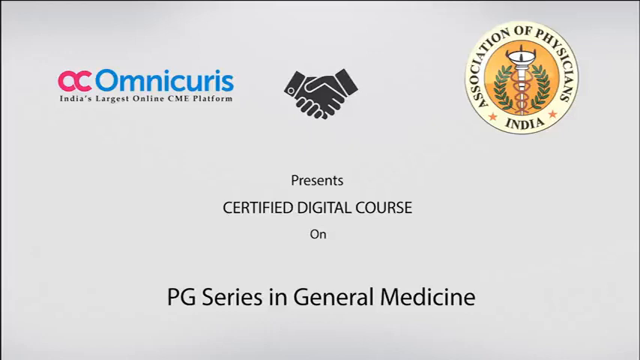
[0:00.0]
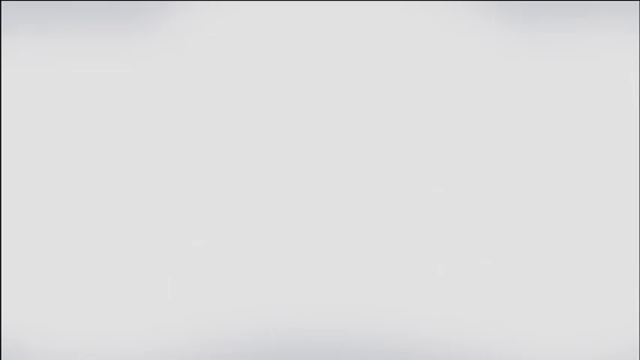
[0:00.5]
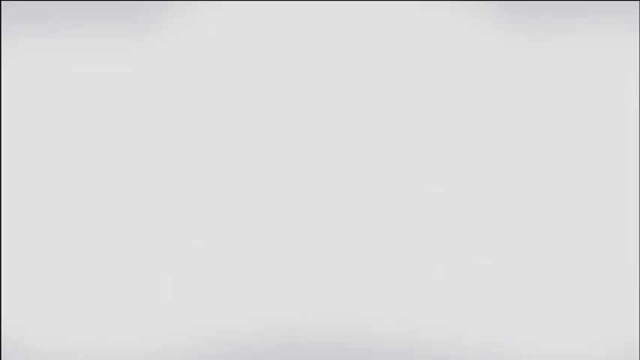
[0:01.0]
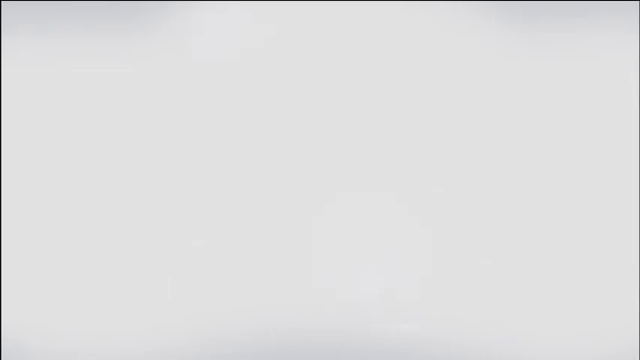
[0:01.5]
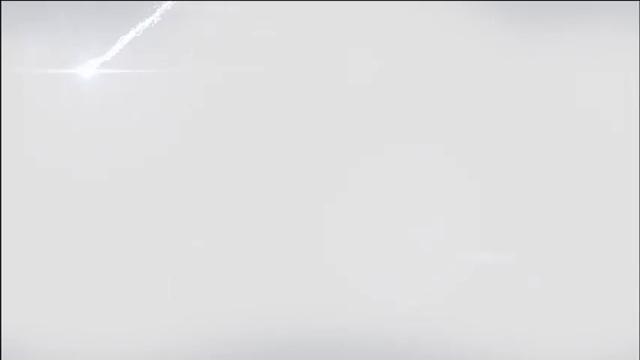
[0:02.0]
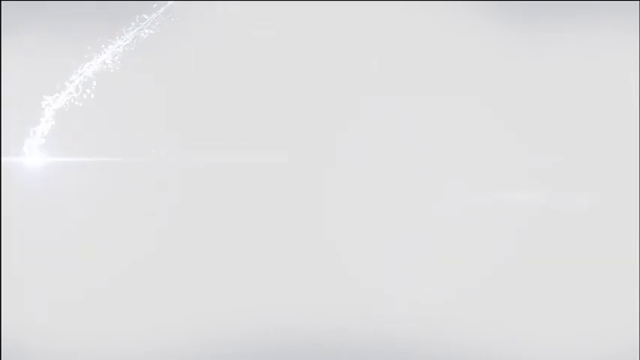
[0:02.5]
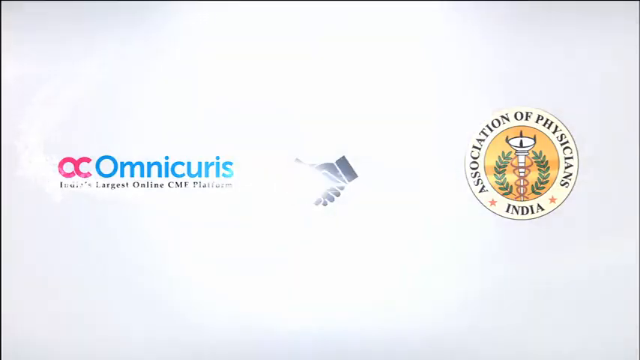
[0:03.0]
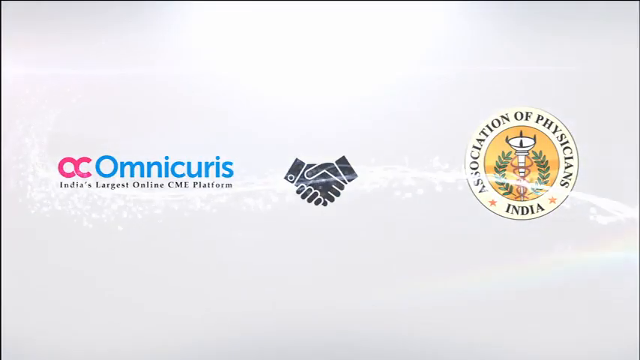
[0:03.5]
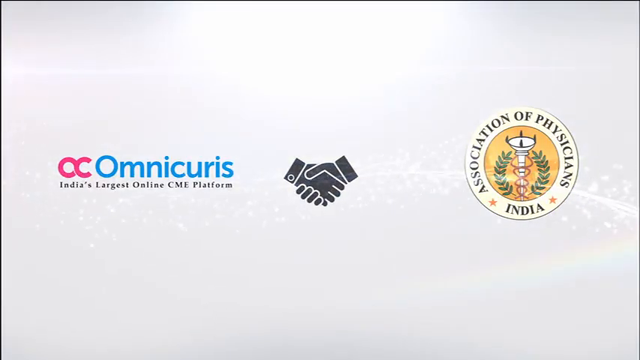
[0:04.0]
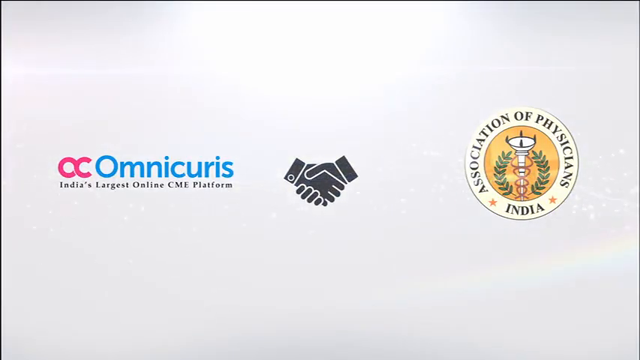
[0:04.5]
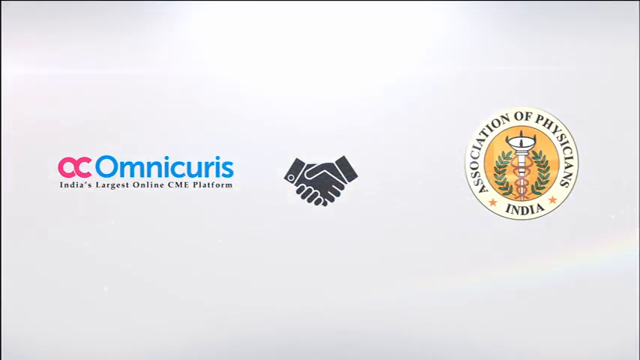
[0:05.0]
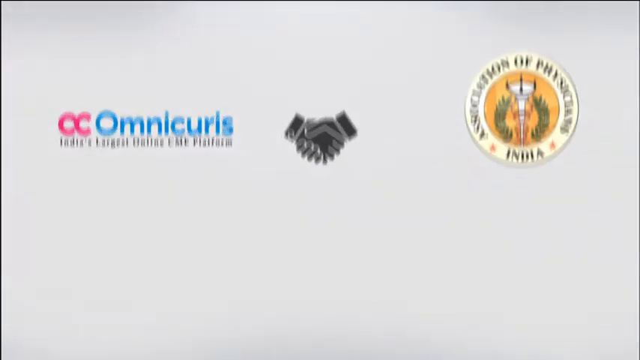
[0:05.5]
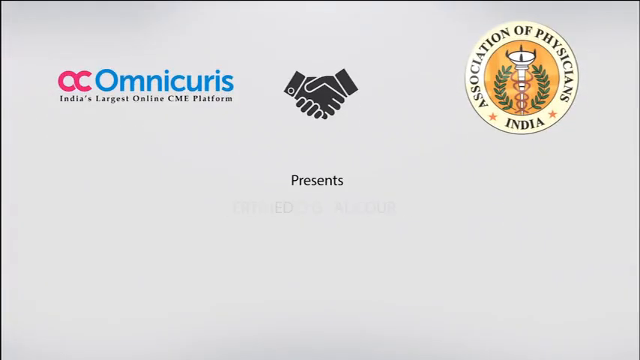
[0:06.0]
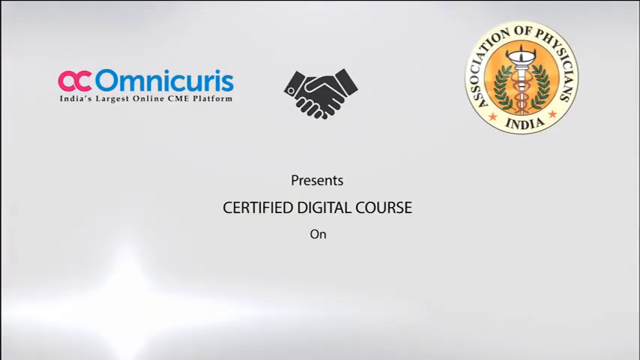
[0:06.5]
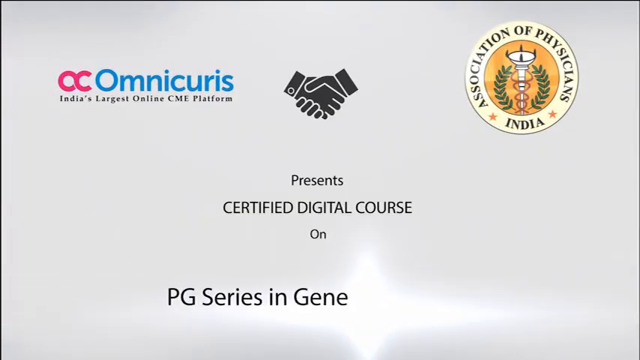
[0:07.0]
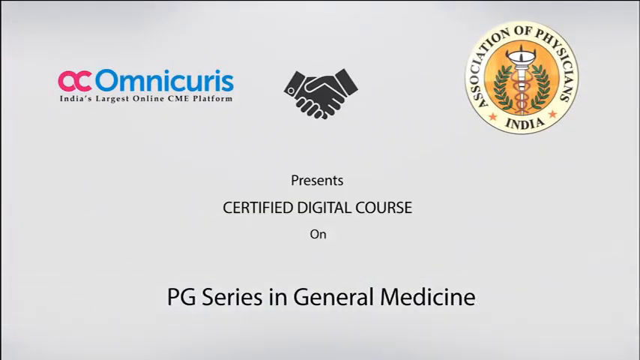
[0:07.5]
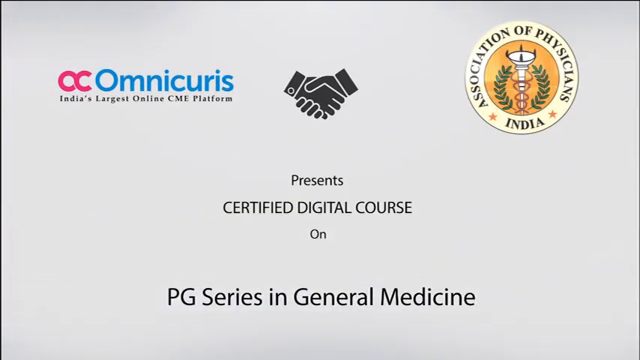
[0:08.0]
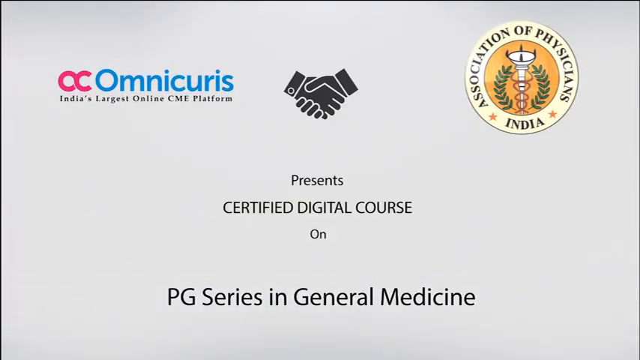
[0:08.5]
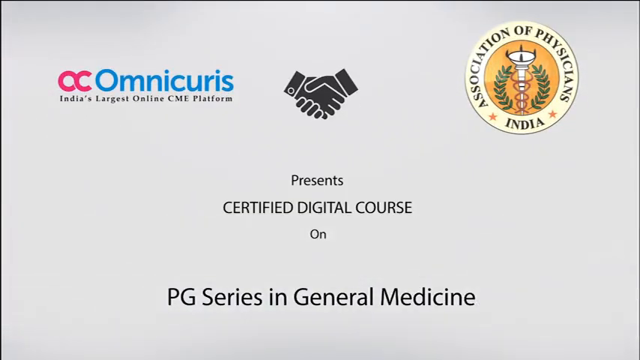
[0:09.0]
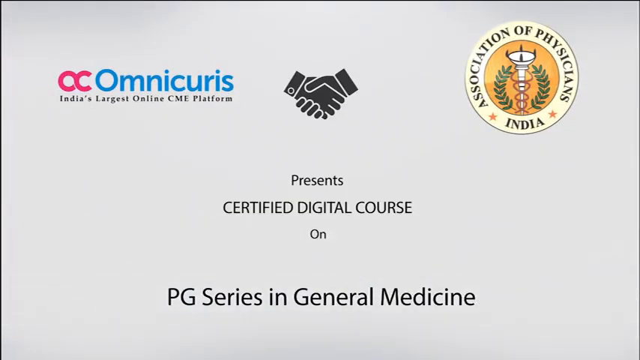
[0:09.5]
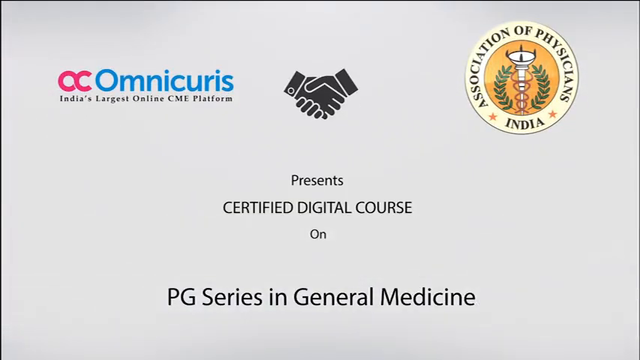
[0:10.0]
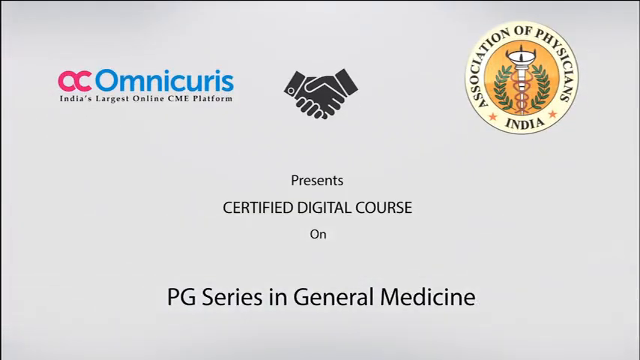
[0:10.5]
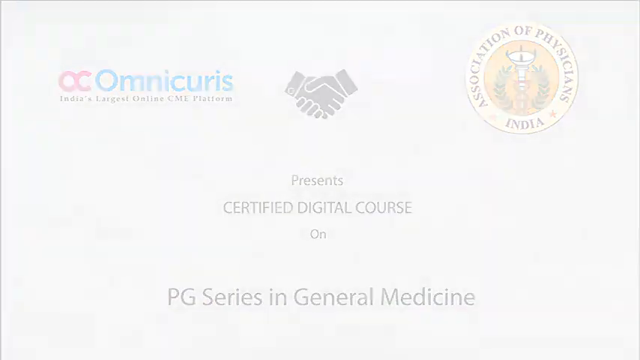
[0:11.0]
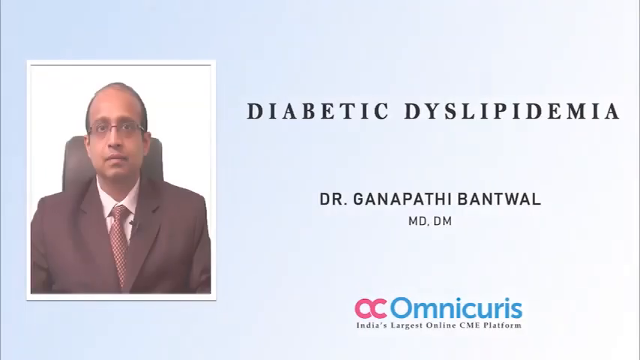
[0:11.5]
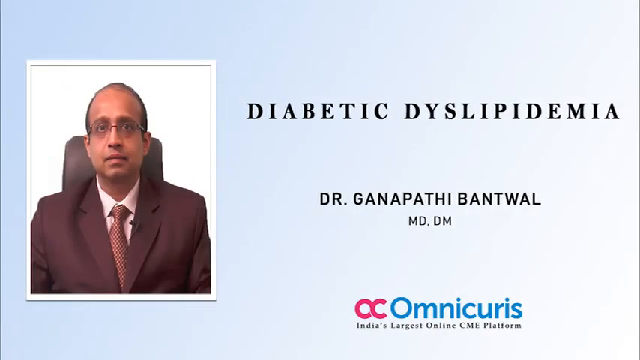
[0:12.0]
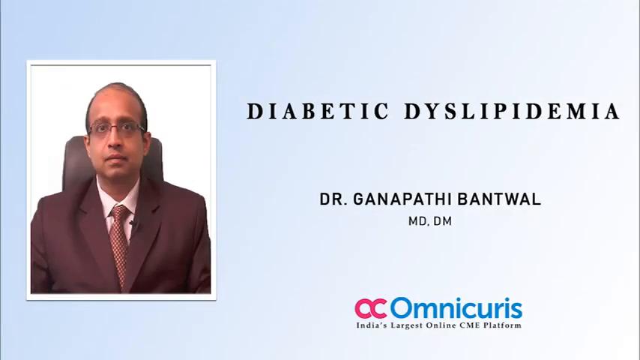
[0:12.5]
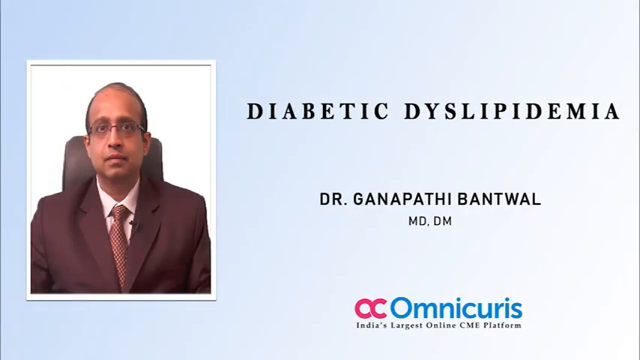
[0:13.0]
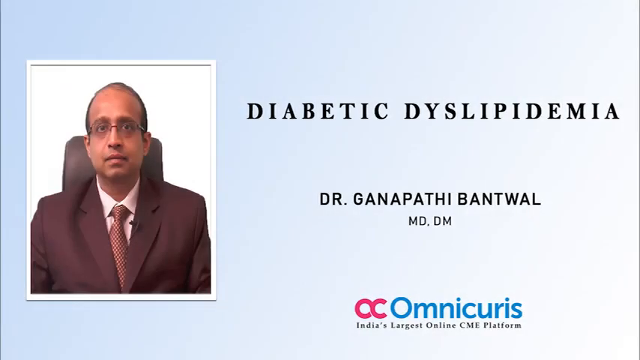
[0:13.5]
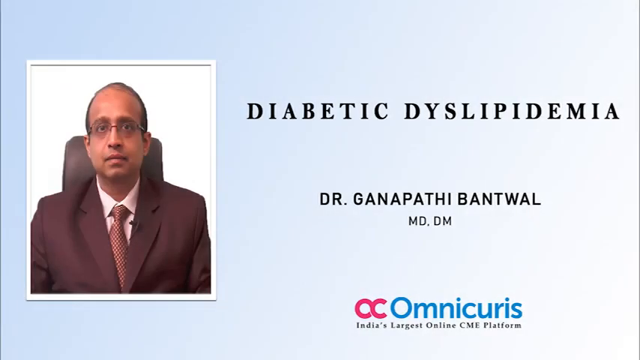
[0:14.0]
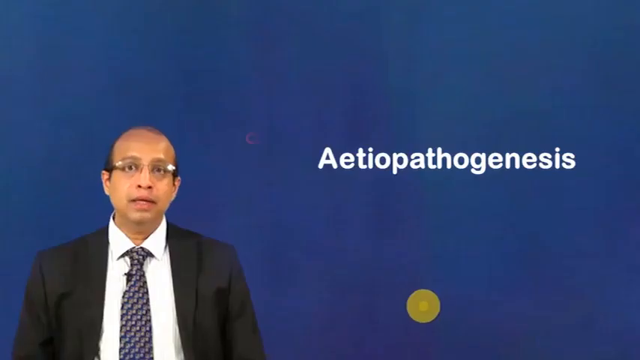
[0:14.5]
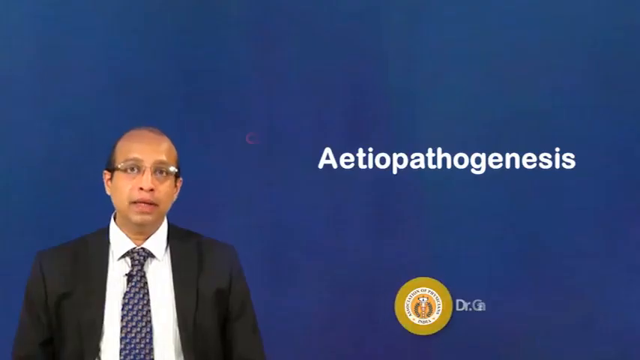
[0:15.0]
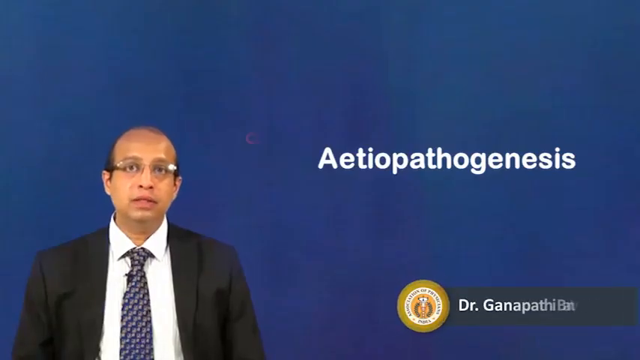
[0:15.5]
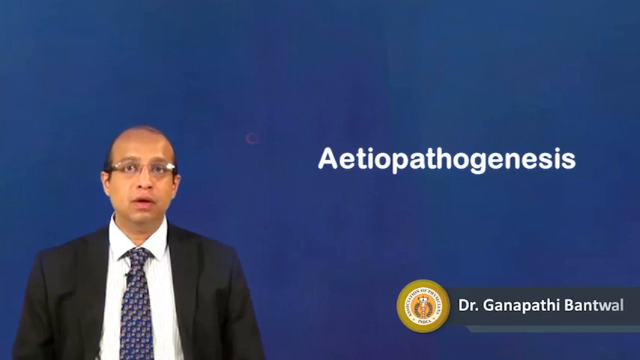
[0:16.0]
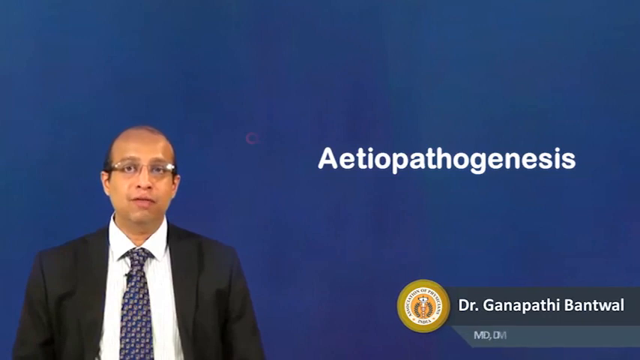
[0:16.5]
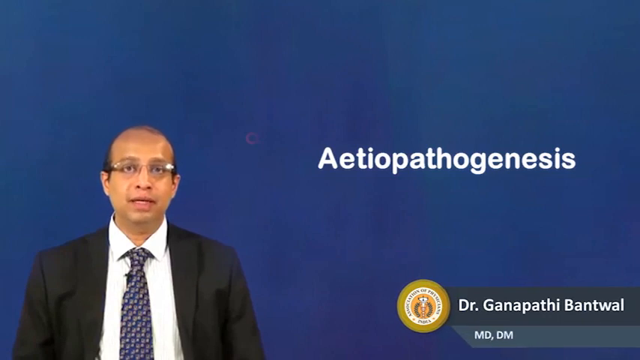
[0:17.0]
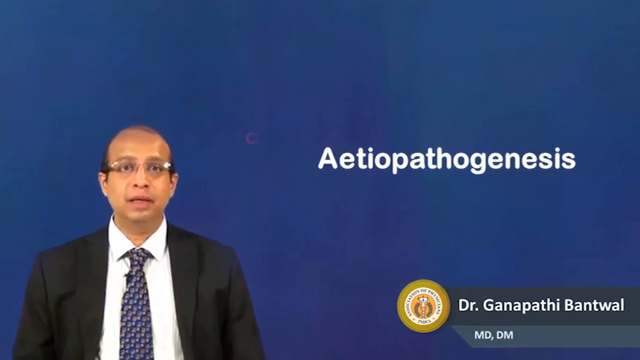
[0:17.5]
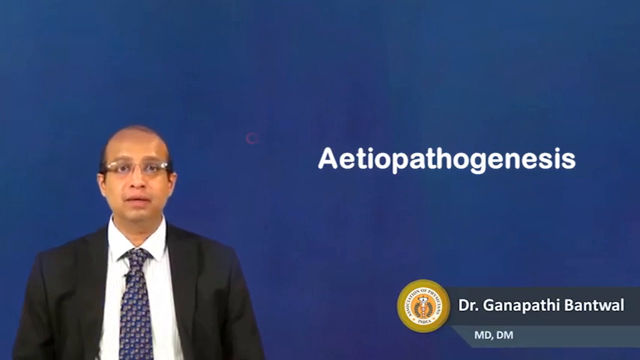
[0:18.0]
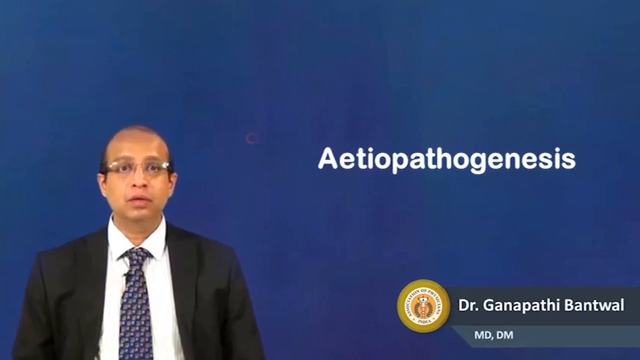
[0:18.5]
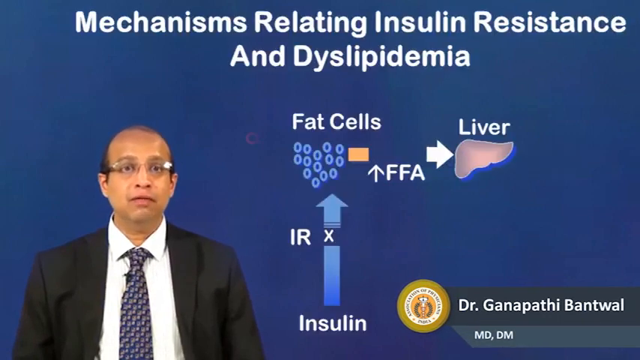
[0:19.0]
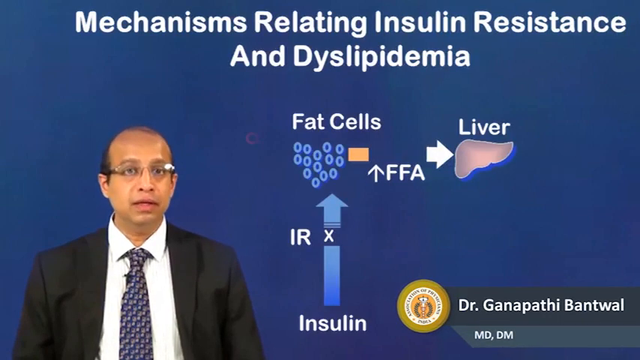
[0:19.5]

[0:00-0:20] The video opens with a title credit, revealed by a sparkle transition that shows the logo, the title and the topic of the video. On the left-hand side the text reads "India's largest online CME platform," with the organization shown above it. In the middle there is an icon of two handshakes, and on the right-hand side is the Association of Physicians of India. The screen then states "presents certified digital course on PG series and general medicine," which is followed by another sparkle transition. A doctor who presents is then introduced, with his portrait on the left. It is a modern photograph that looks like it could have been taken in an office, since he is sitting on a chair; the background is white, and the photo is in a digital white frame. The video then transitions to him speaking directly to the camera against a dark navy blue background, with a medical term on screen and the doctor's name shown in the bottom right of the screen to identify who is talking.